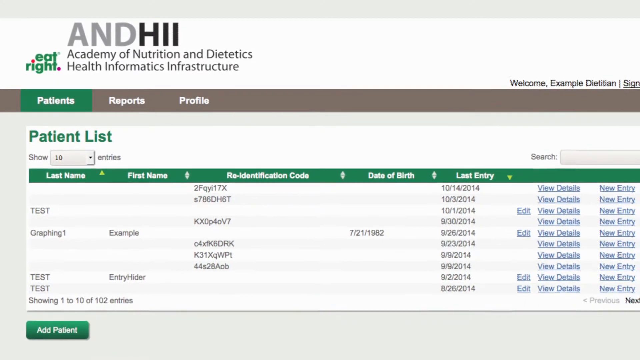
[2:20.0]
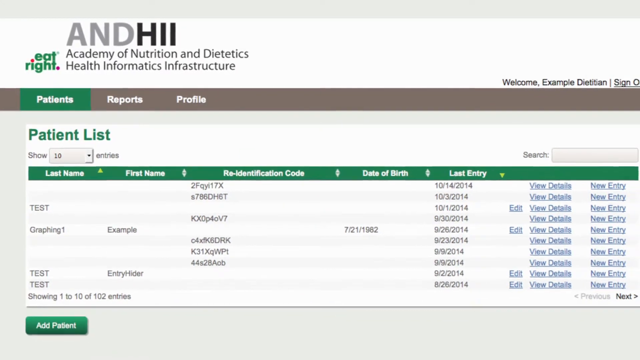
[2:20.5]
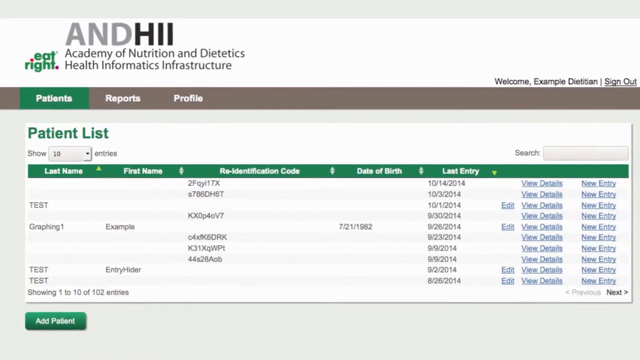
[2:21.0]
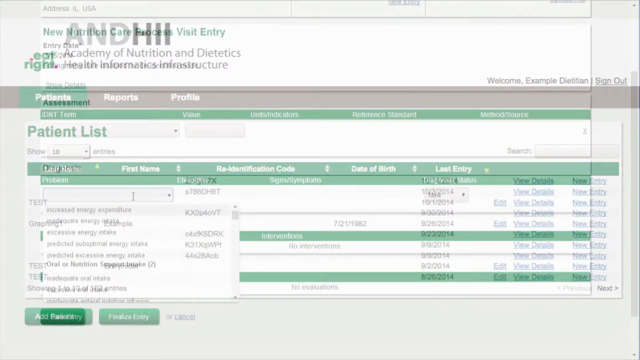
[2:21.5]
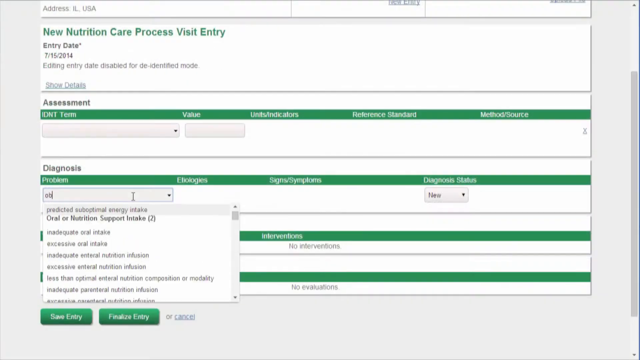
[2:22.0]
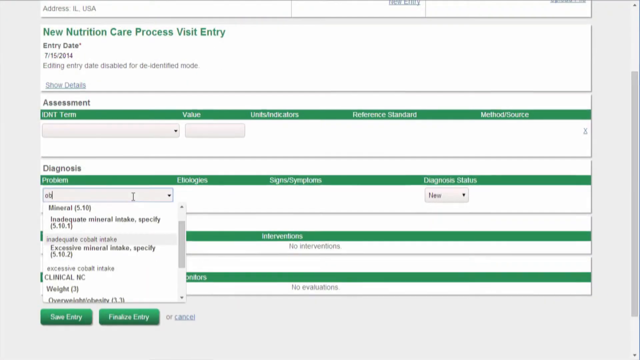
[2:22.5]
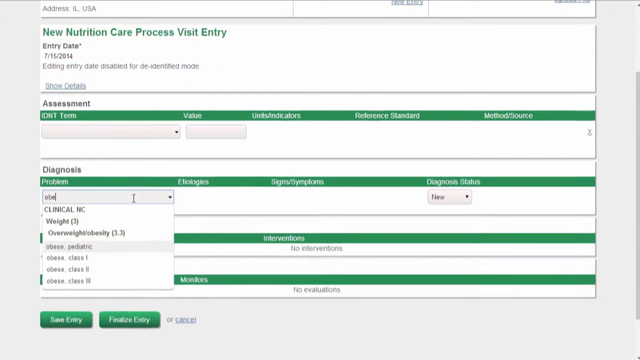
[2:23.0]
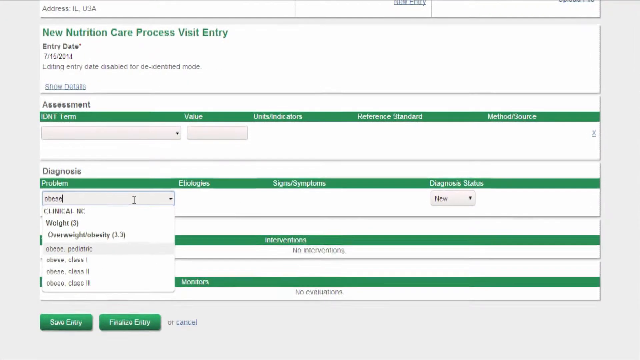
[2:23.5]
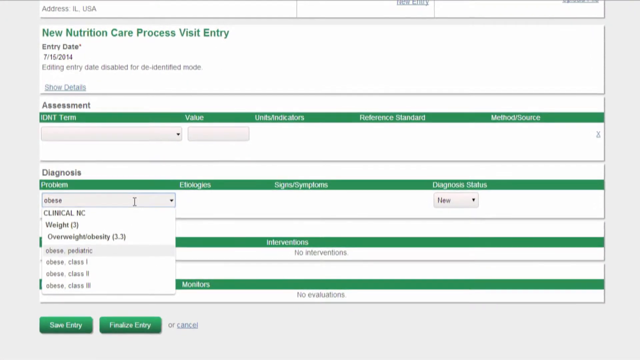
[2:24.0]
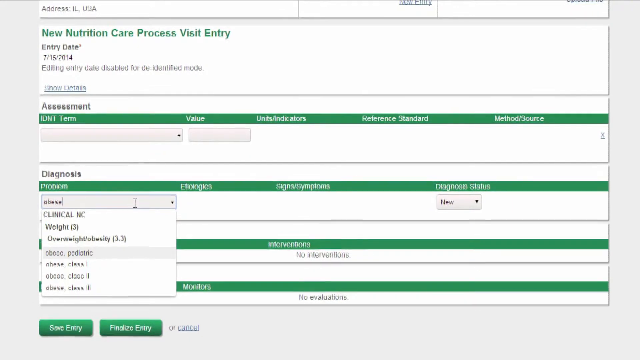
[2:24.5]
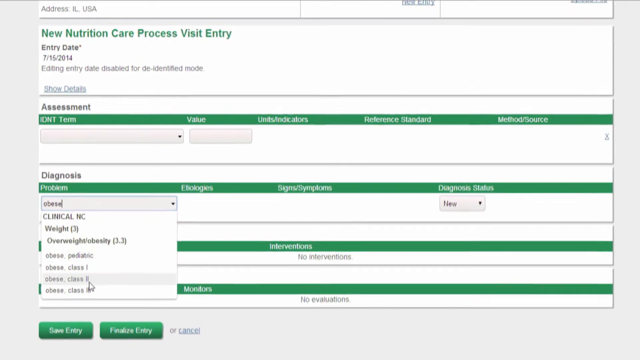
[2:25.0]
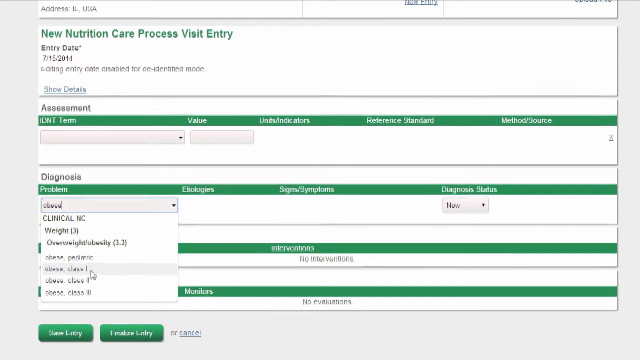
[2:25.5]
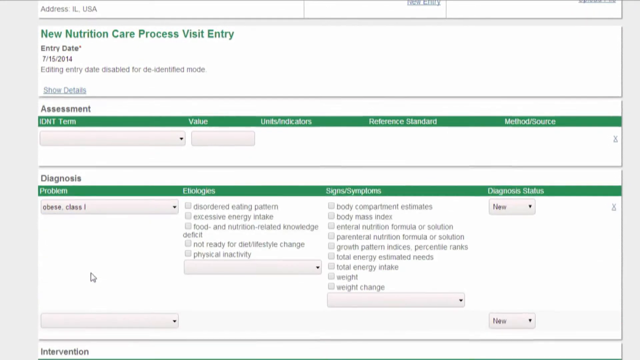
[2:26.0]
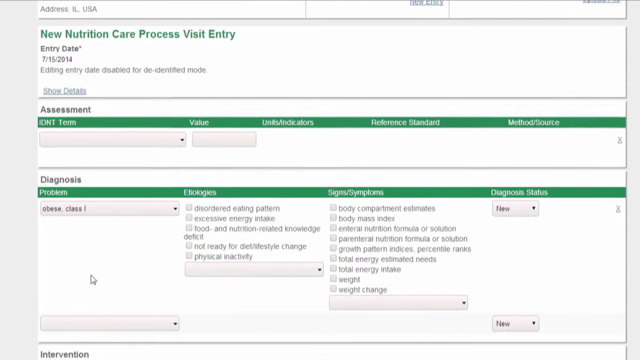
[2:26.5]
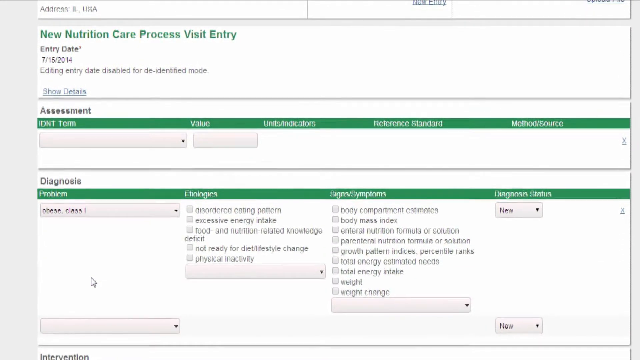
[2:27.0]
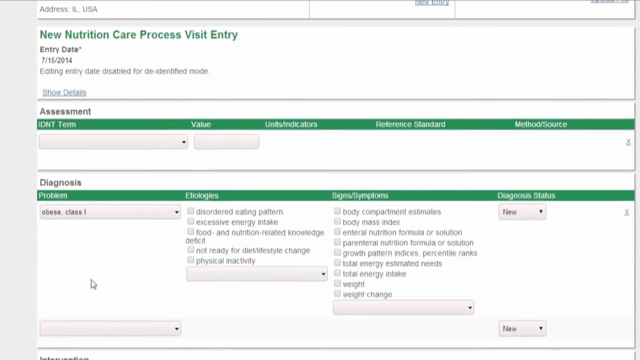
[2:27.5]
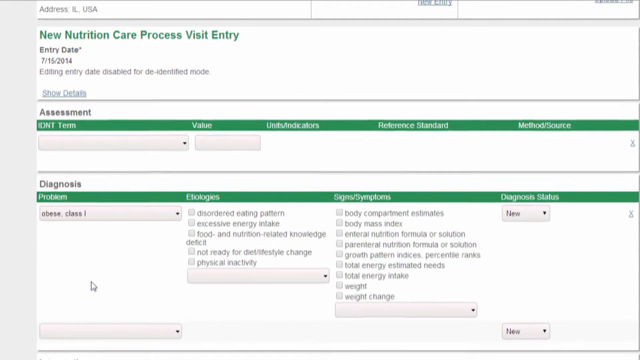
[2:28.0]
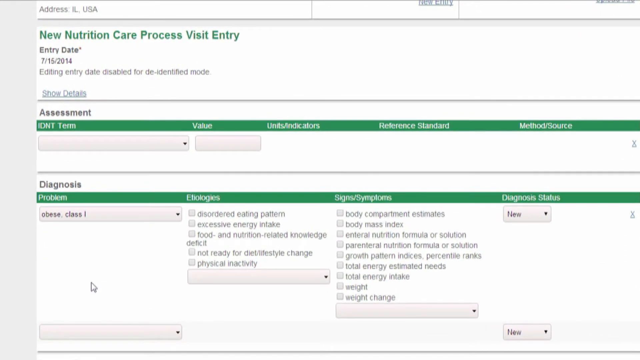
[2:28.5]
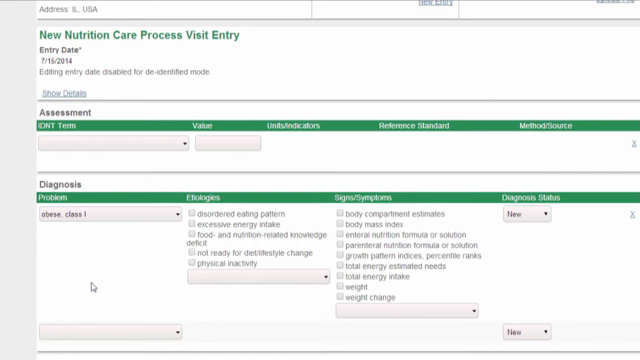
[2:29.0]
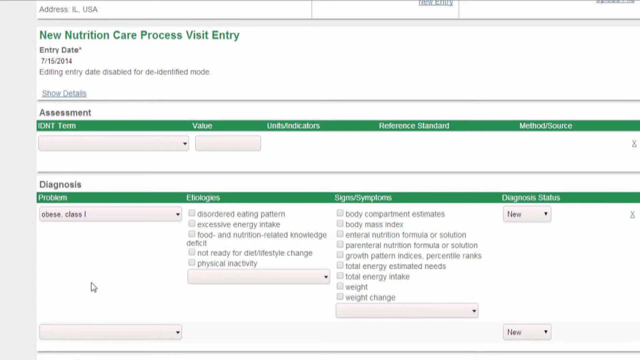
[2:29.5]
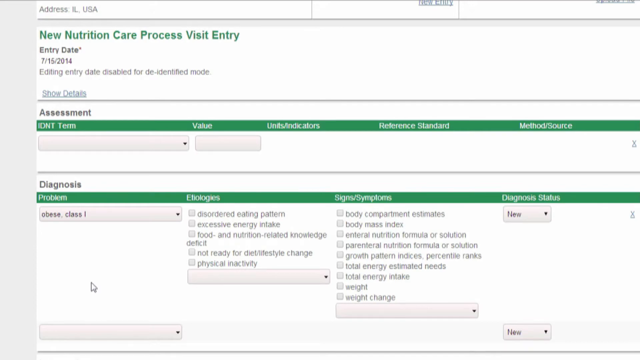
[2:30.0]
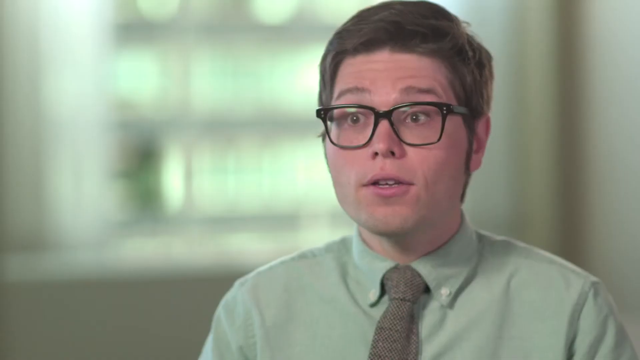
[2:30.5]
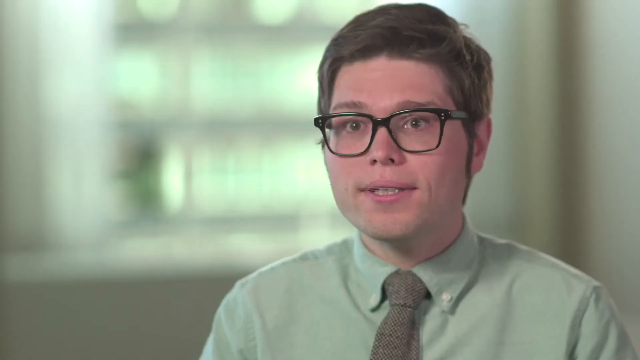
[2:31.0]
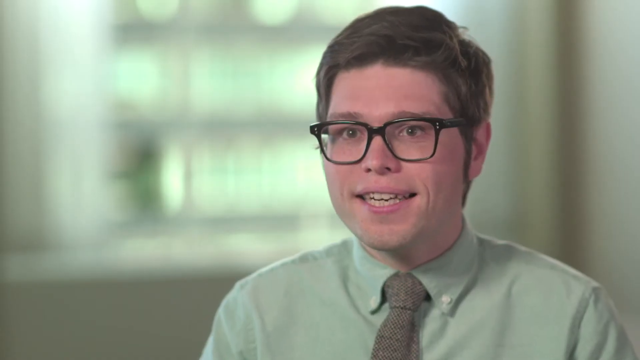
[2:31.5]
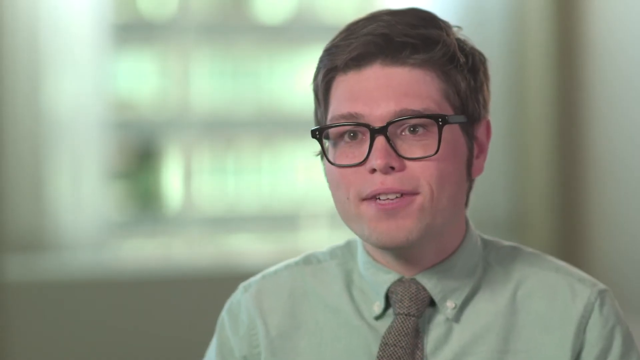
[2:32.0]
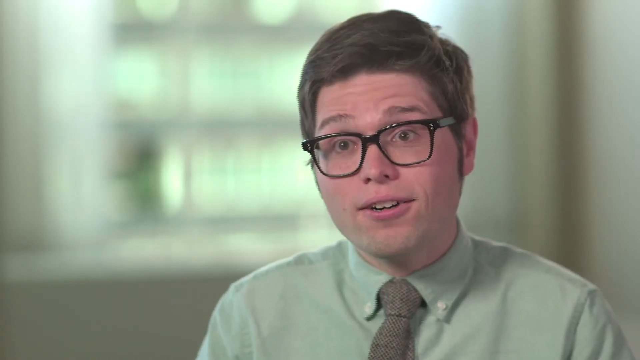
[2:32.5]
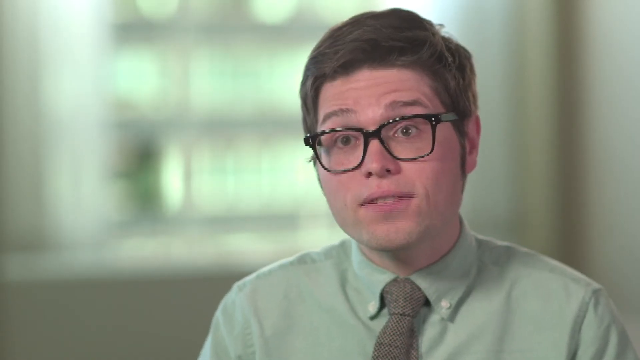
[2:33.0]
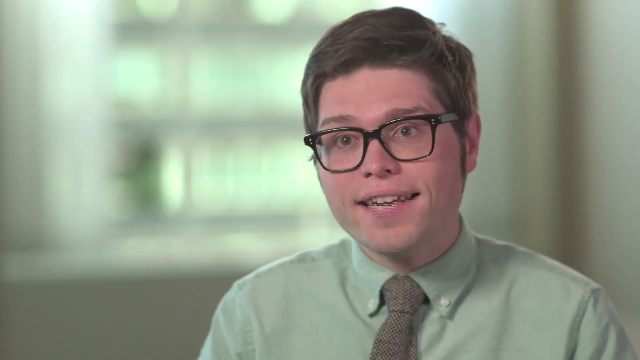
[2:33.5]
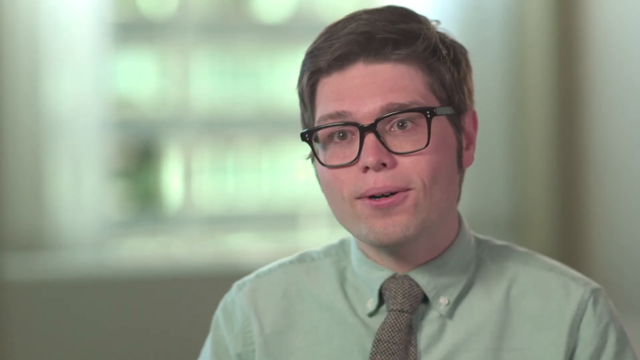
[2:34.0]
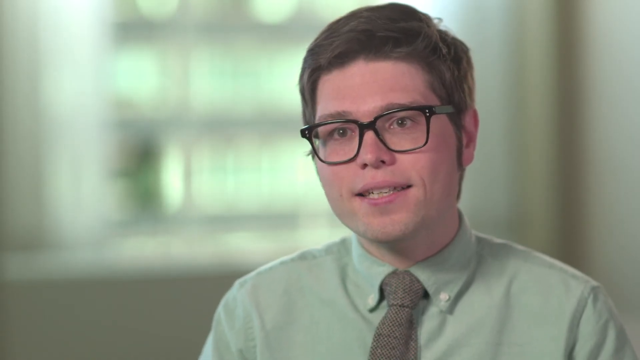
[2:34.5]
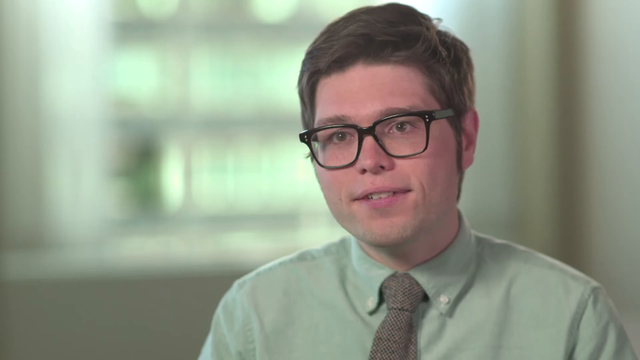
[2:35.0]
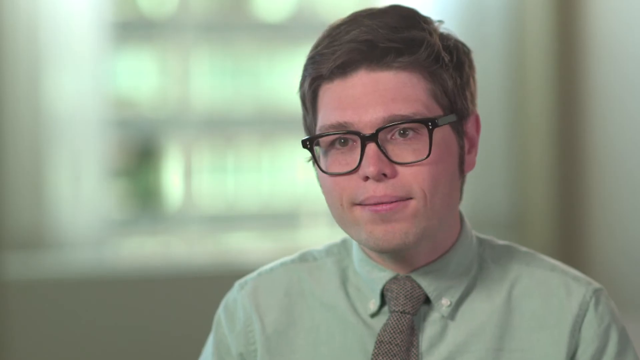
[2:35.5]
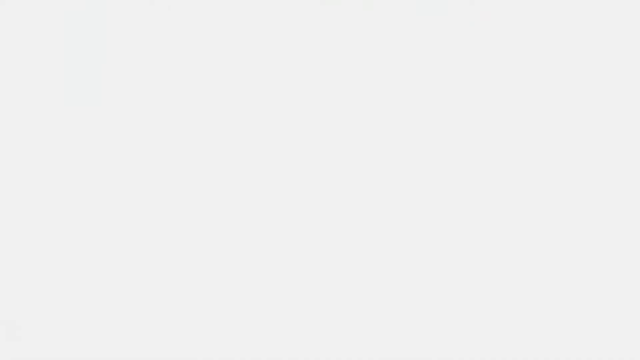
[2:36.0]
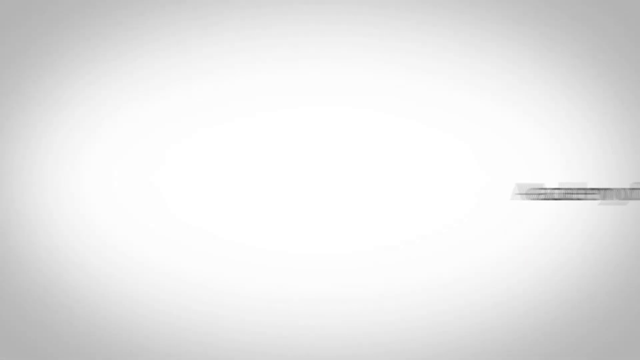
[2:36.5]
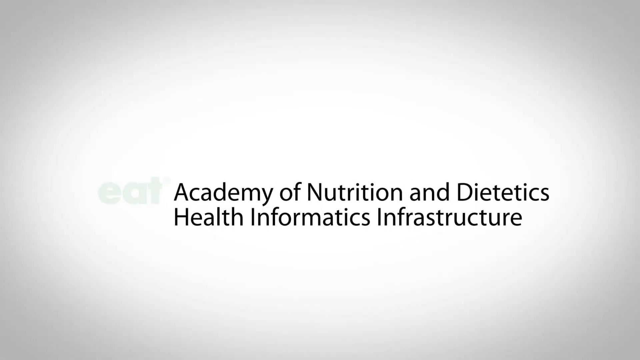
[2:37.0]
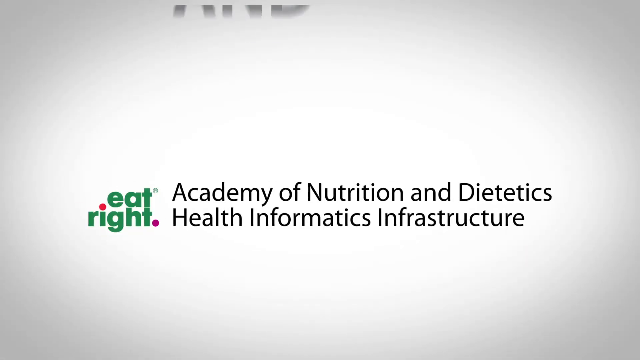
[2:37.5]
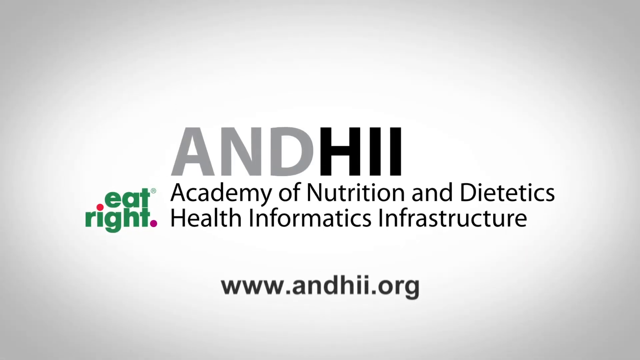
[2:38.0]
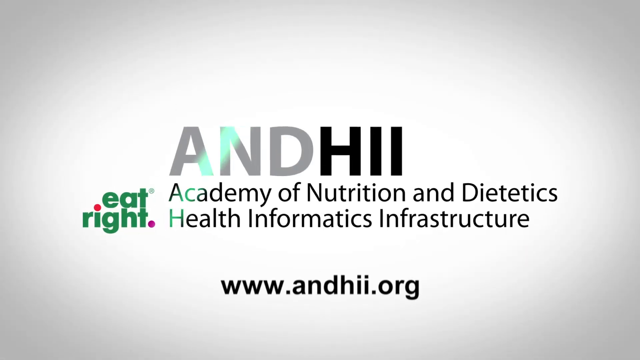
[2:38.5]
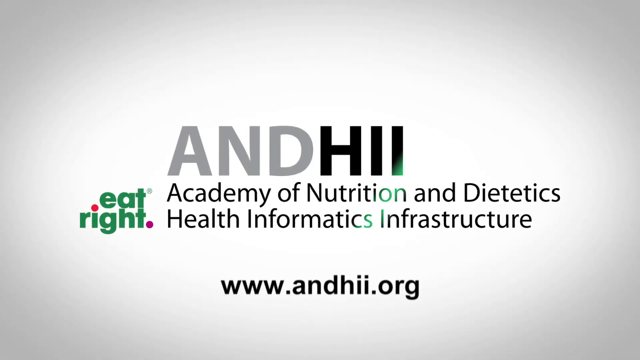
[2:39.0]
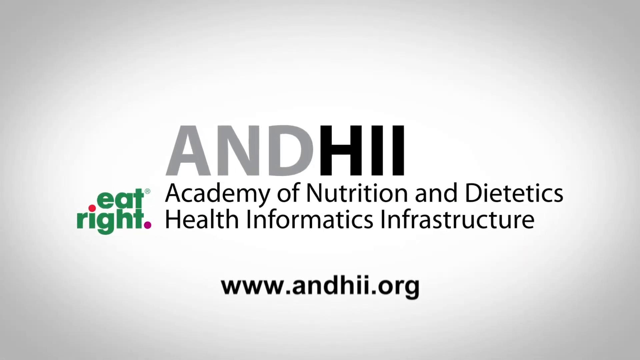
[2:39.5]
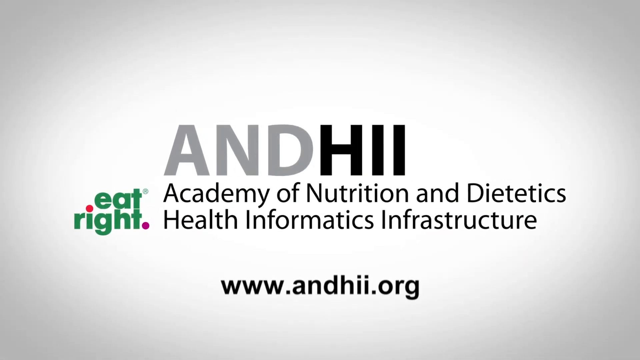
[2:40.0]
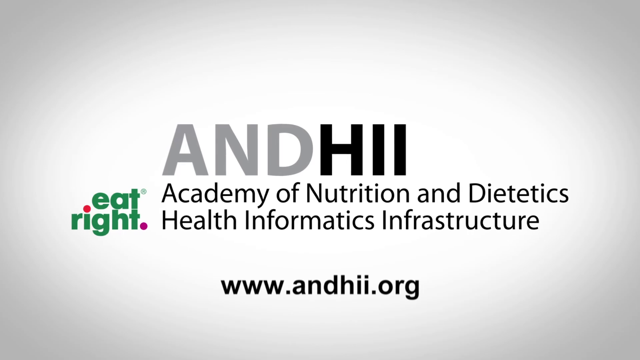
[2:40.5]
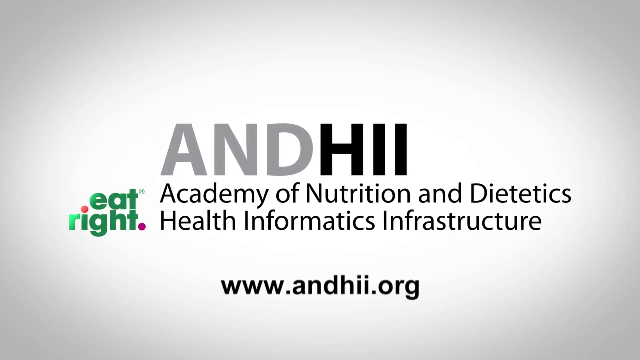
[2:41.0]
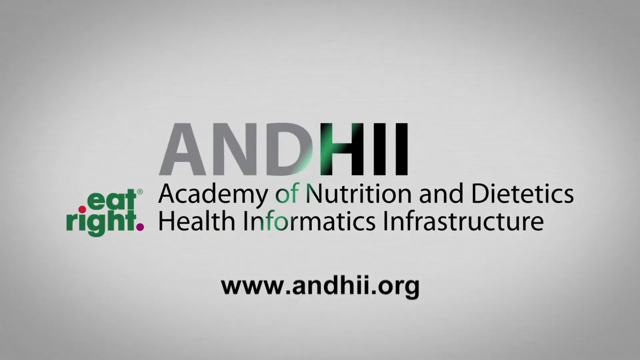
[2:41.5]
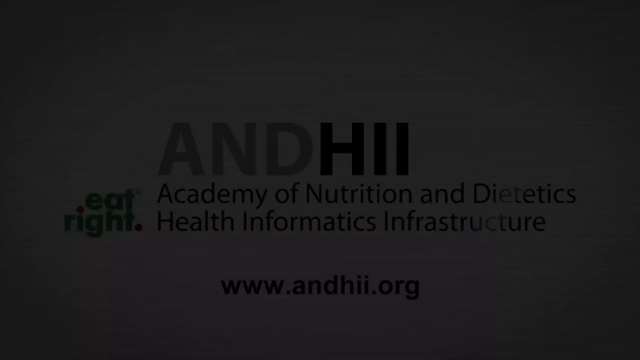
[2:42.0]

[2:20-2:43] A computer screen shows a form with a white background and green across it, reading "New Nutrition Care Process Visit Entry", with the date, assessments and a lot of other information, seen in a close look. The video returns to the young man with short dark hair and dark glasses. It then moves to the white, gray and black gradient page with the AND HII logo, featuring "eat right" in green with a red dot over the i and a red period beside it, and "Academy of Nutrition and Dietetics Health Informatics Infrastructure". At the bottom, "www.andhi.org" has been added.